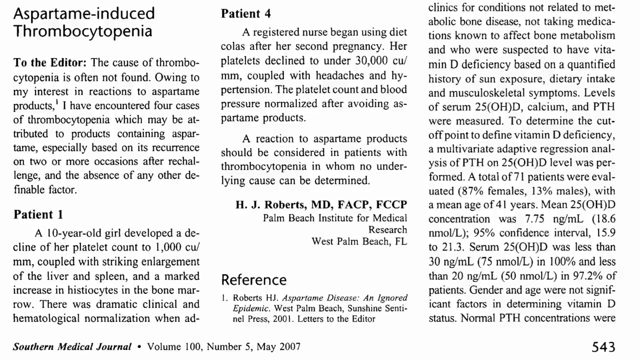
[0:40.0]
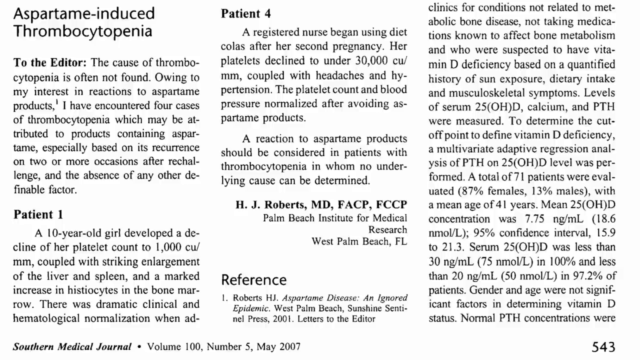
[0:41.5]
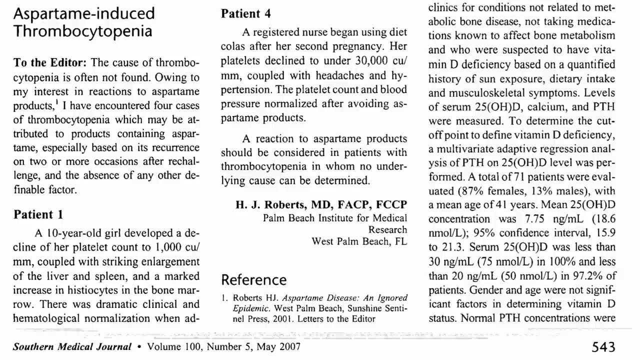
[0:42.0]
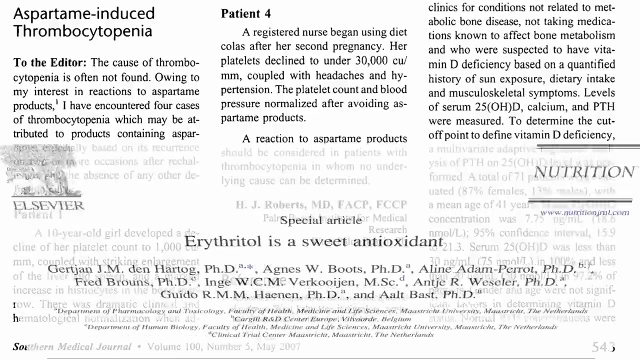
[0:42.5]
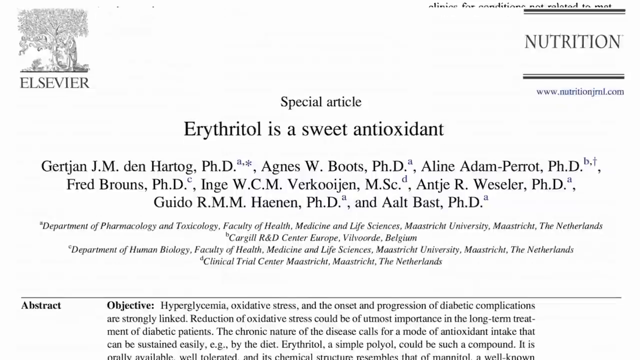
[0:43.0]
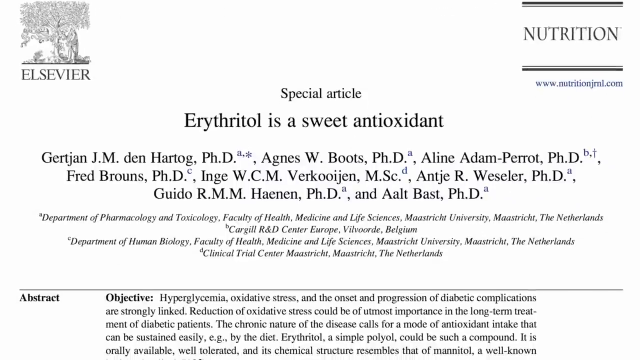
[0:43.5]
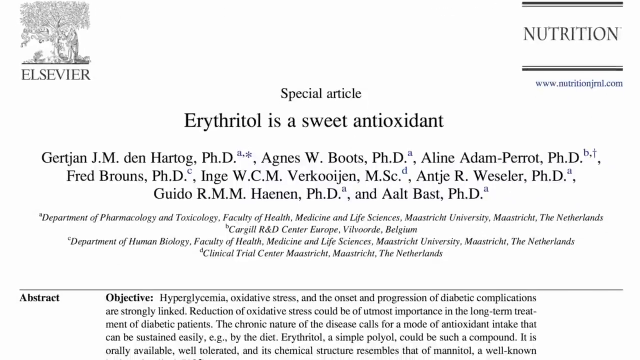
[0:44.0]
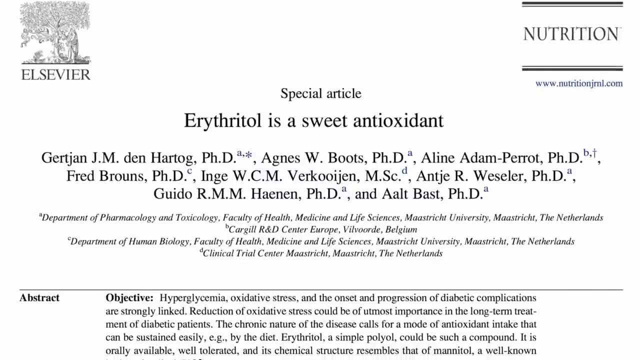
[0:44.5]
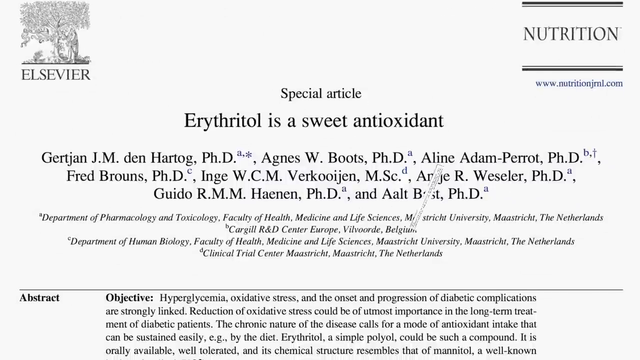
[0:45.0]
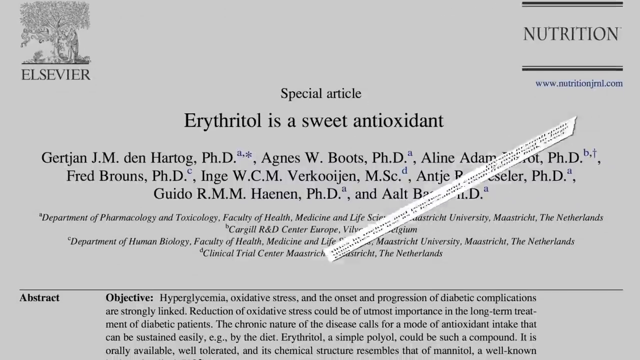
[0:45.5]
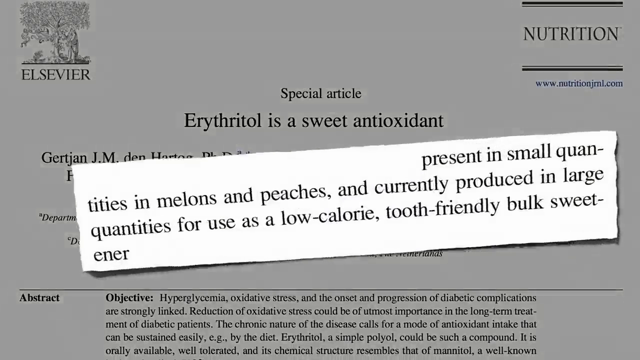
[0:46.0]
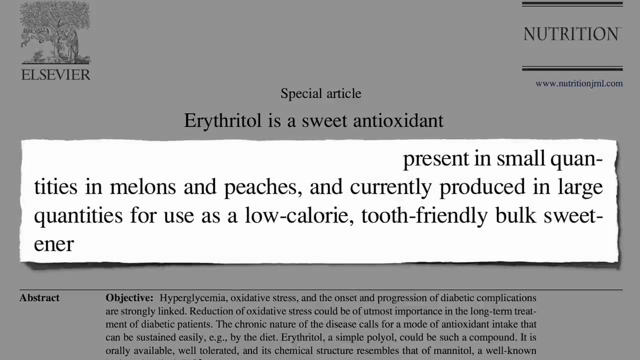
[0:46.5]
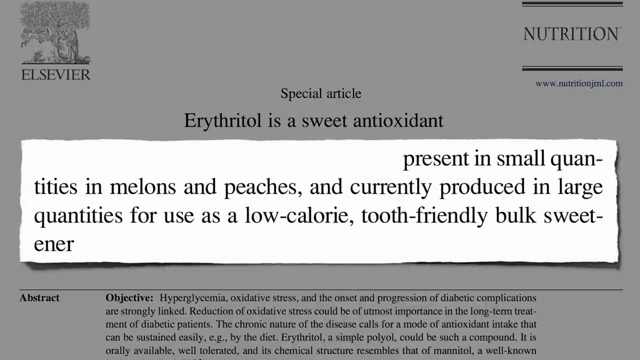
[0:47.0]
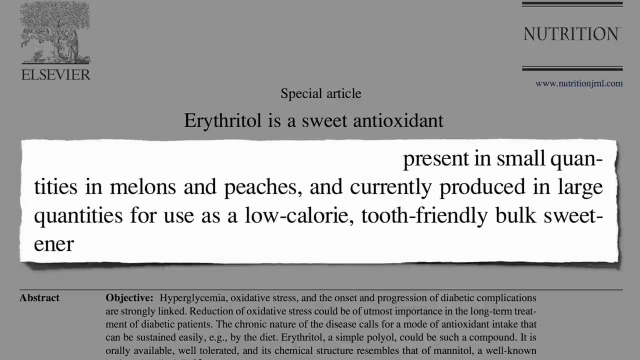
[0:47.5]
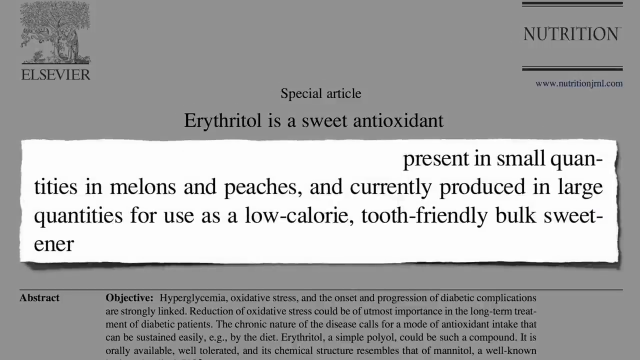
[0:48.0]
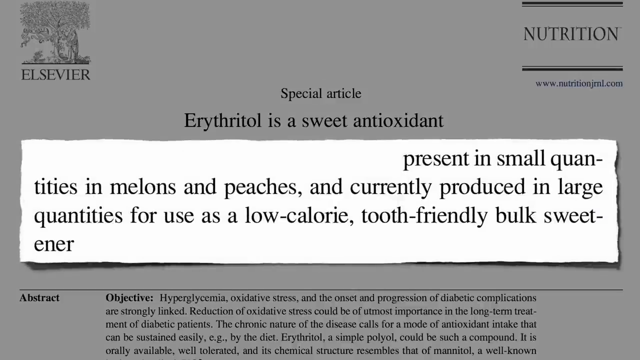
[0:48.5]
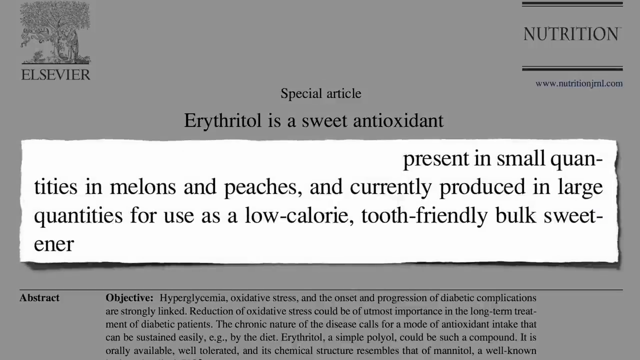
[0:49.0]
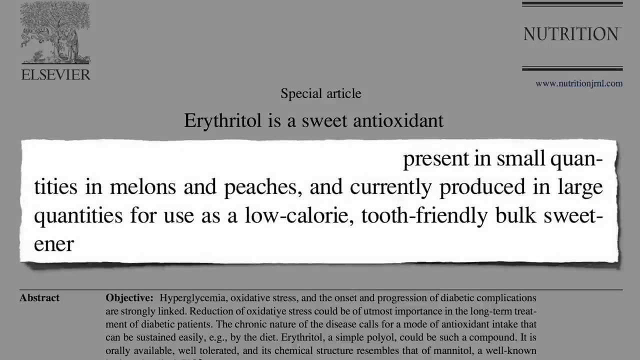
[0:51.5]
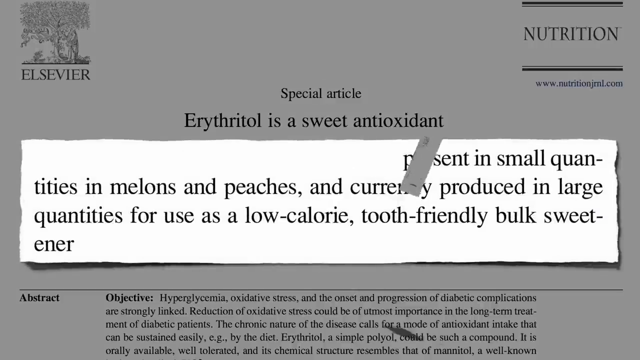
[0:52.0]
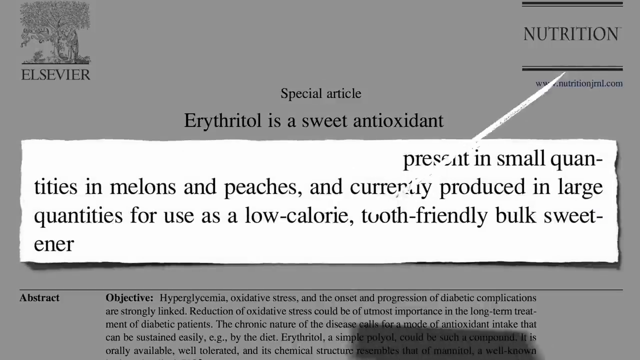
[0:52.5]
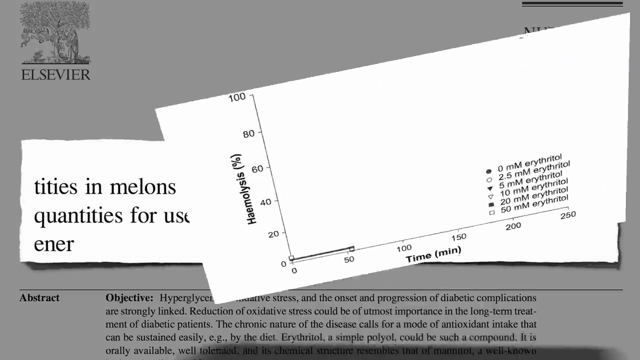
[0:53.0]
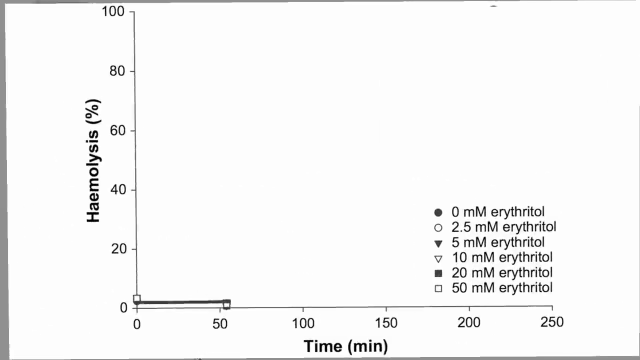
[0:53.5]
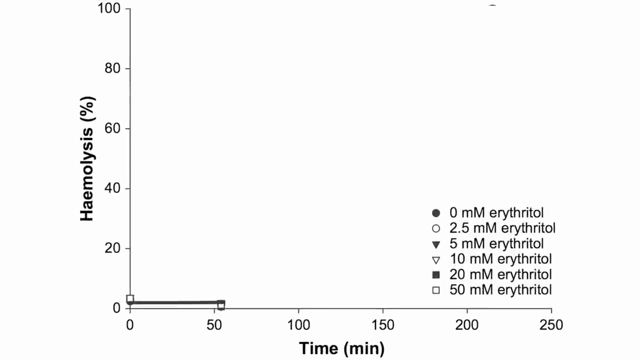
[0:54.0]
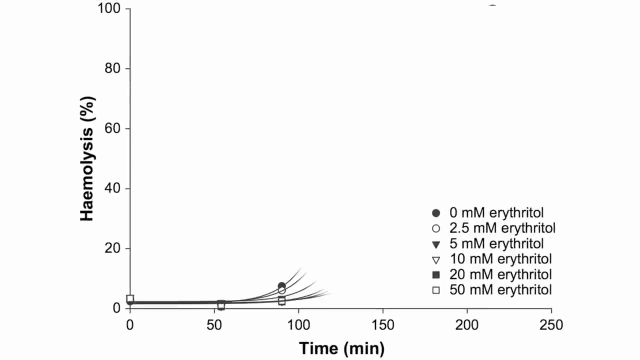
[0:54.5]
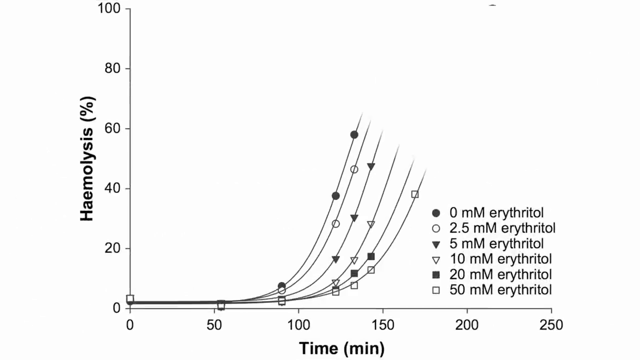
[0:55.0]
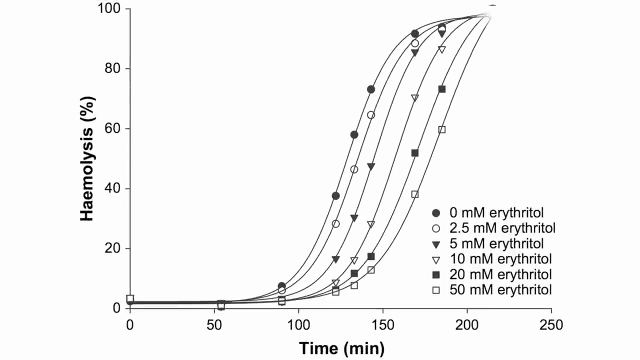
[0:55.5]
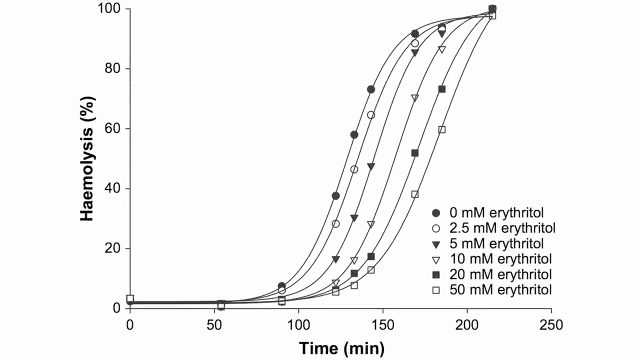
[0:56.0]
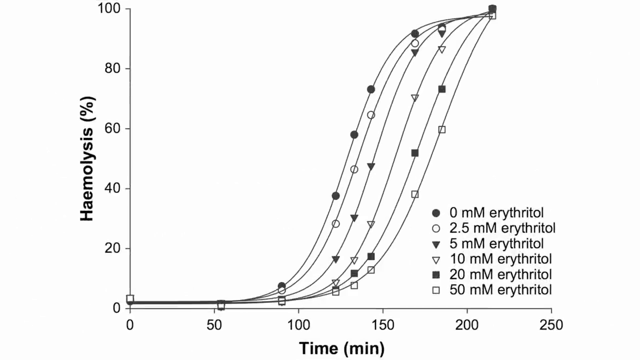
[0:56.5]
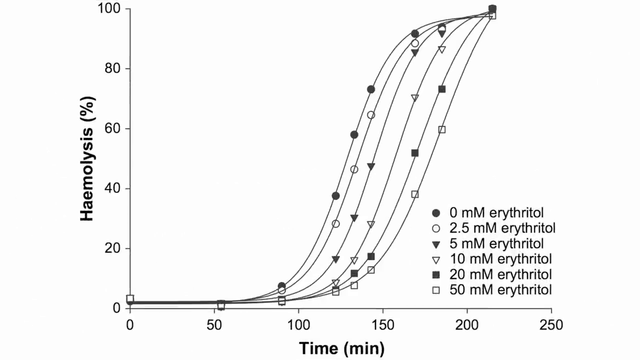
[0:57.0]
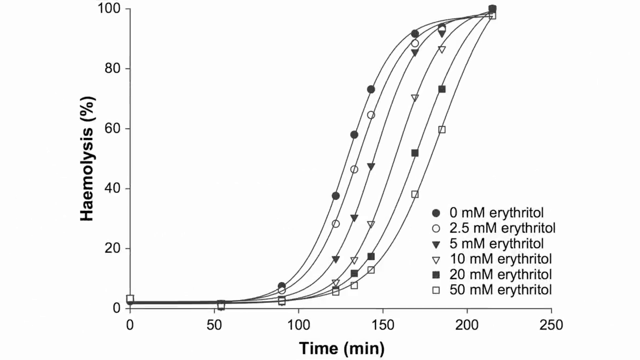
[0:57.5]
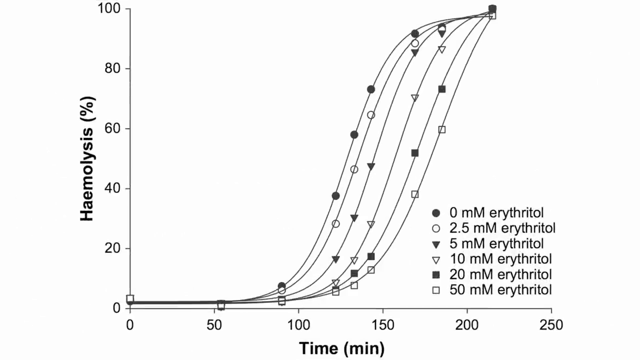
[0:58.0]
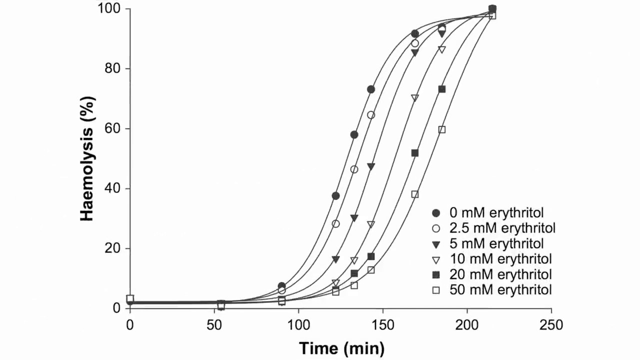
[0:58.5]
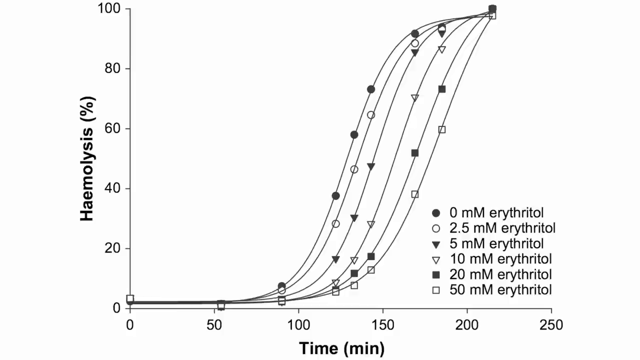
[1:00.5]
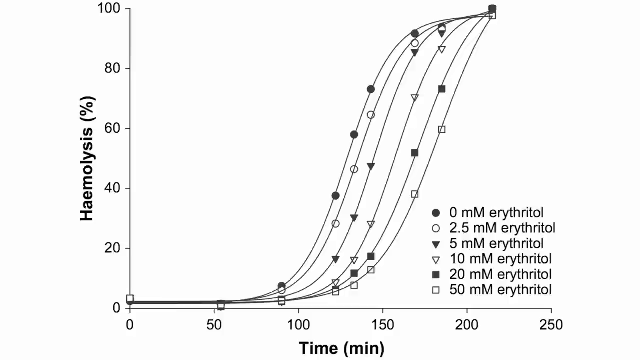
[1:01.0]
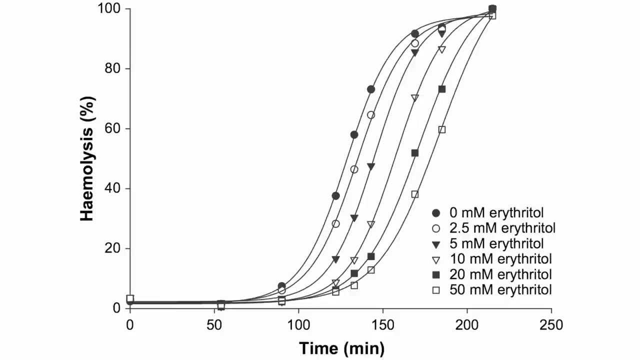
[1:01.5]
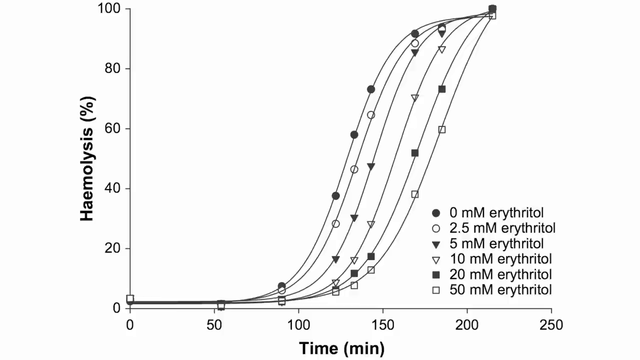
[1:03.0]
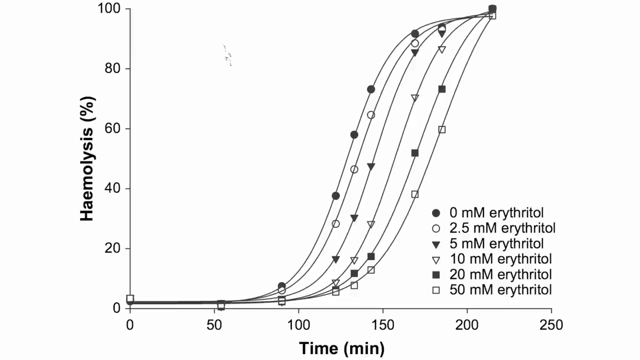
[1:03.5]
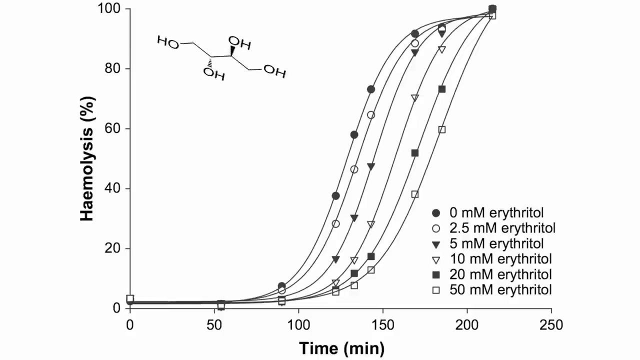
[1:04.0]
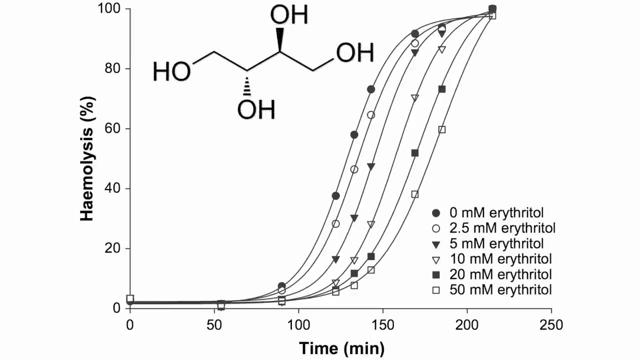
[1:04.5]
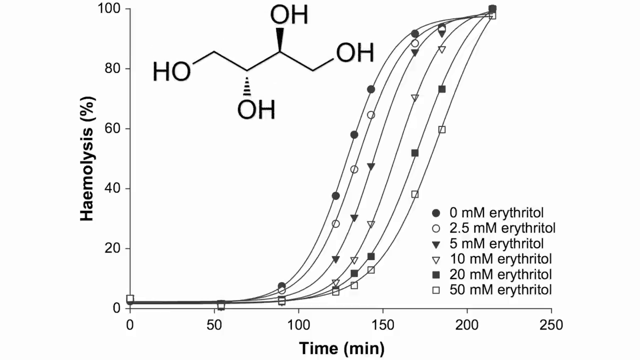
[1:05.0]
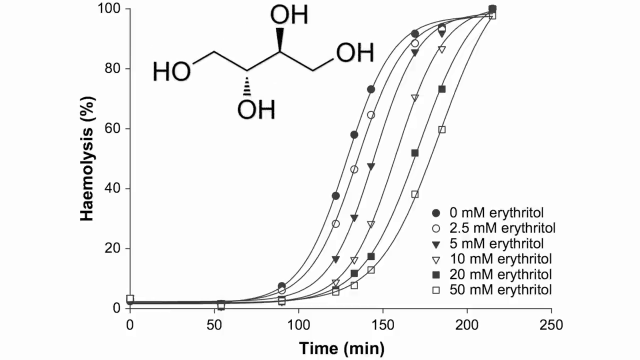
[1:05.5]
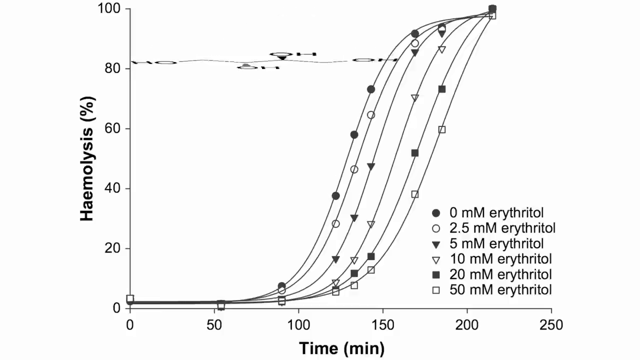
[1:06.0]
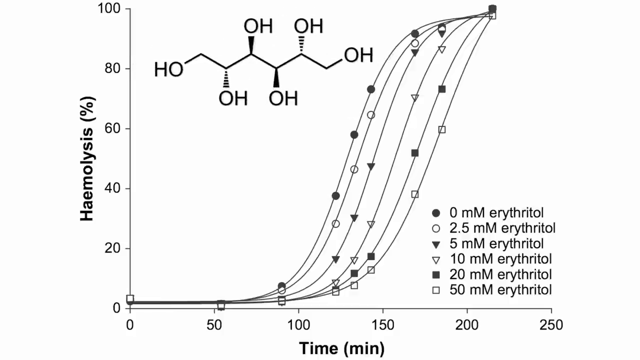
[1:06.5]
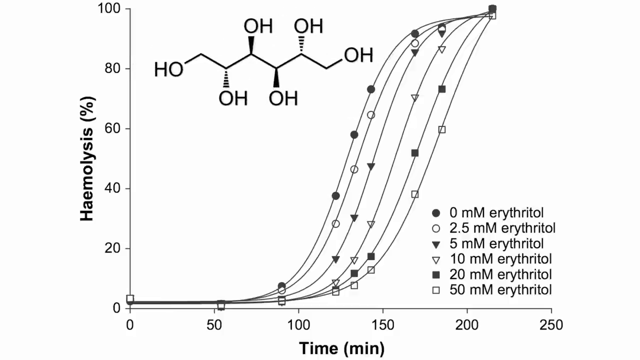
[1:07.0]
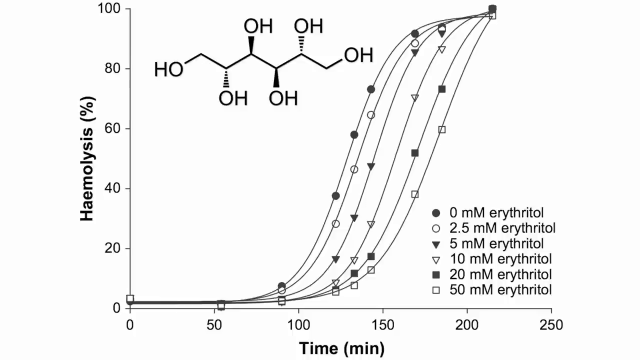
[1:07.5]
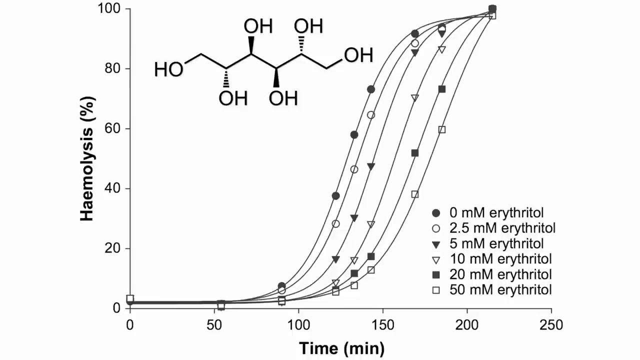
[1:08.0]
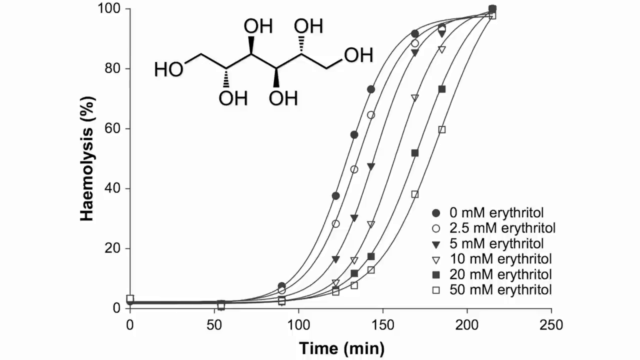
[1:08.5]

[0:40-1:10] Black text on a white background begins at the top left: "aspartame-induced thrombocytopenia." Below it reads: "To the editor, the cause of thrombocytopenia is often not found, owing to my interest in reactions to aspartame products. I have encountered four cases of thrombocytopenia, which may be attributed to products containing aspartame, especially based on its recurrence on two or more occasions after rechallenge and the absence of any other definable factor. Patient 1. A 10-year-old girl developed a decline of her platelet count to 1,000 cu per millimeter, coupled with striking enlargement of liver and spleen, and a marked increase in histocytes in the bone marrow. There was a dramatic clinical and hematological normalization when" and the rest of that sentence is not readable. Further text reads: "Patient 4, a registered nurse, began using diet colas after her second pregnancy. Her platelets declined to under 30,000 cu per millimeter, coupled with headaches and hypertension. Her platelet count and blood pressure normalized after avoiding aspartame products."